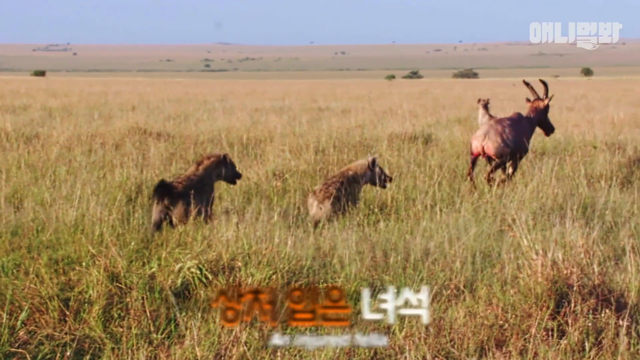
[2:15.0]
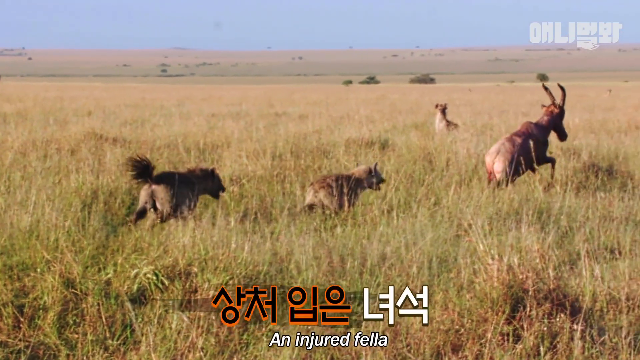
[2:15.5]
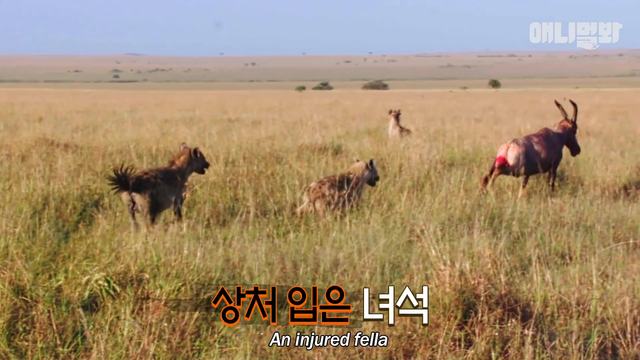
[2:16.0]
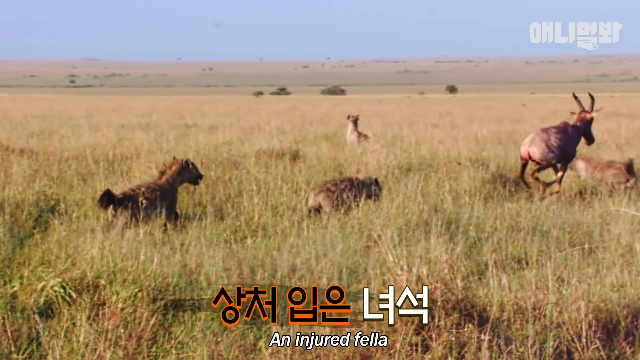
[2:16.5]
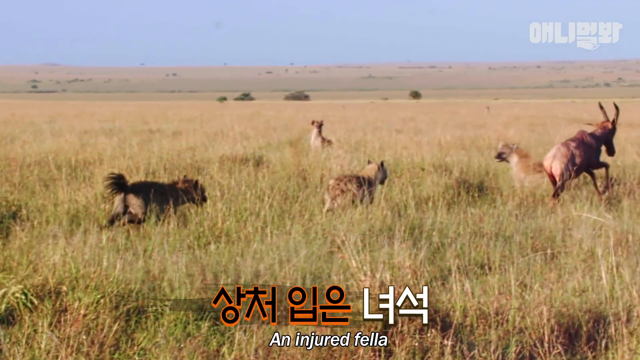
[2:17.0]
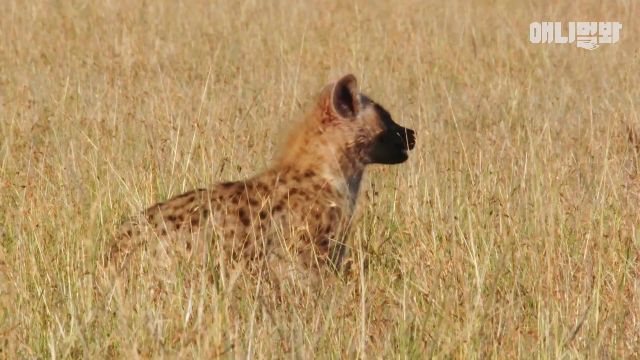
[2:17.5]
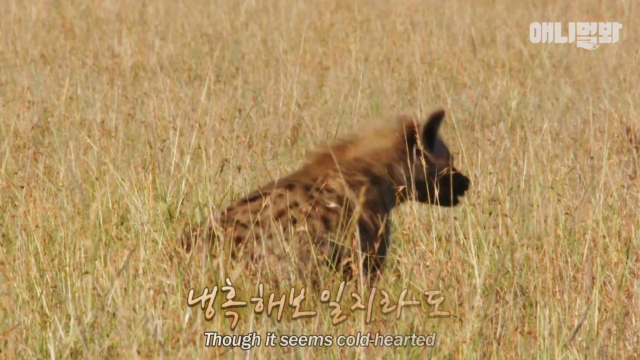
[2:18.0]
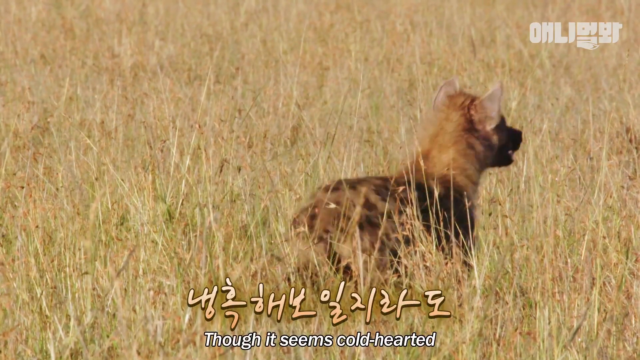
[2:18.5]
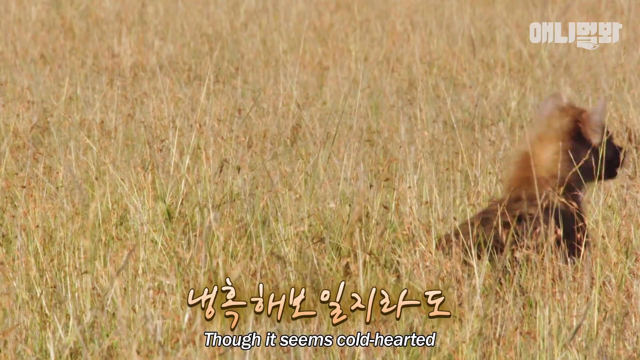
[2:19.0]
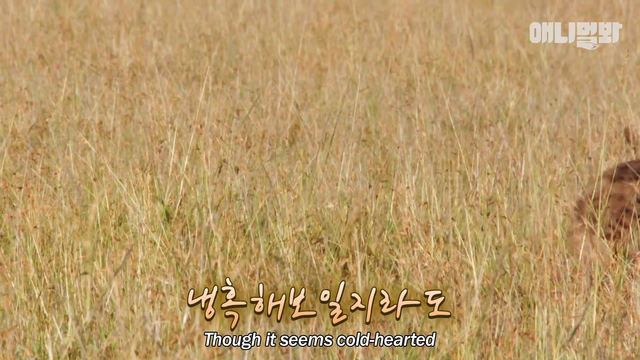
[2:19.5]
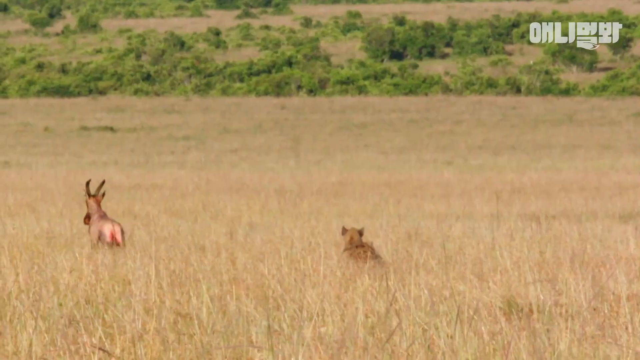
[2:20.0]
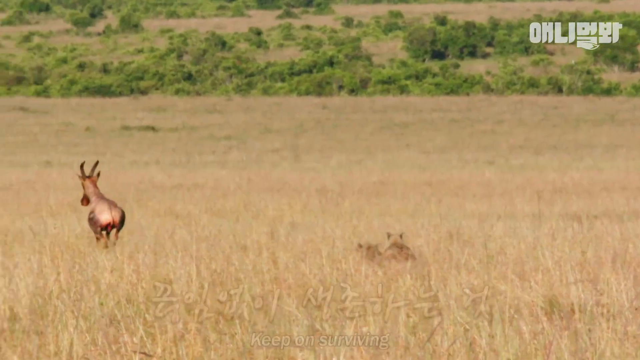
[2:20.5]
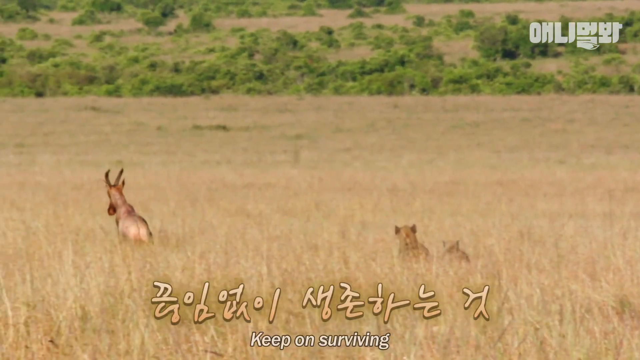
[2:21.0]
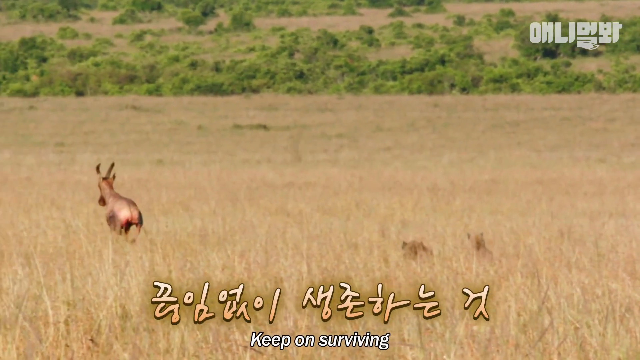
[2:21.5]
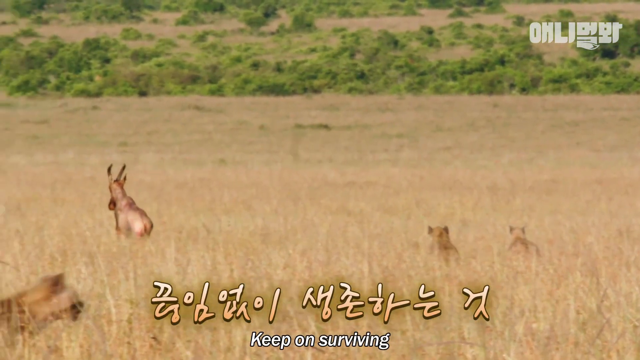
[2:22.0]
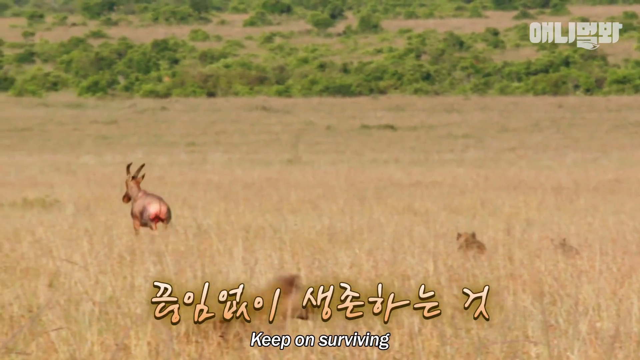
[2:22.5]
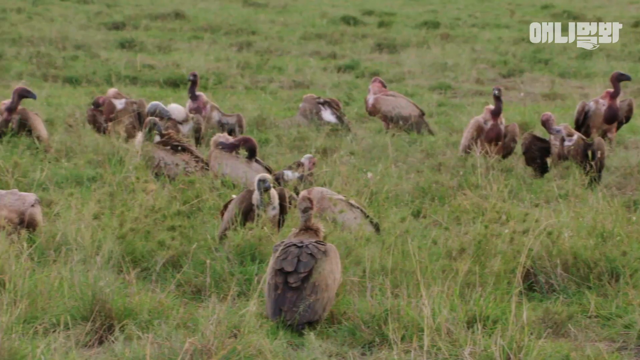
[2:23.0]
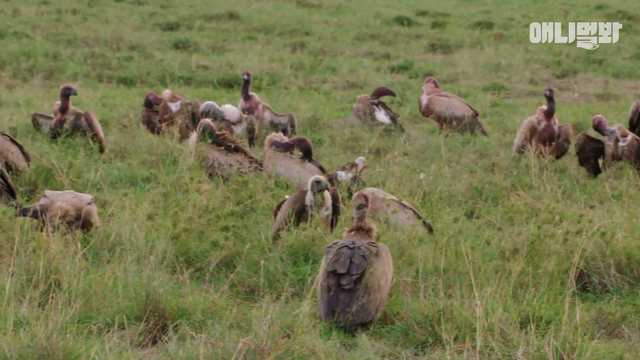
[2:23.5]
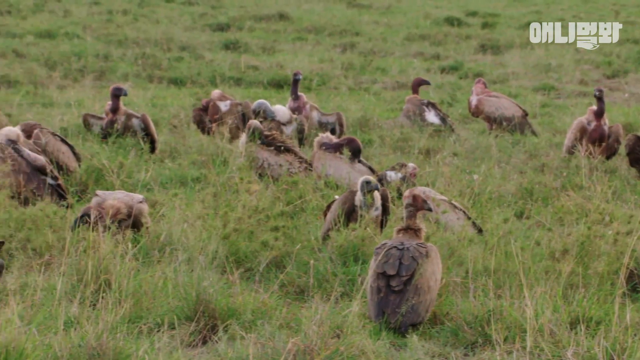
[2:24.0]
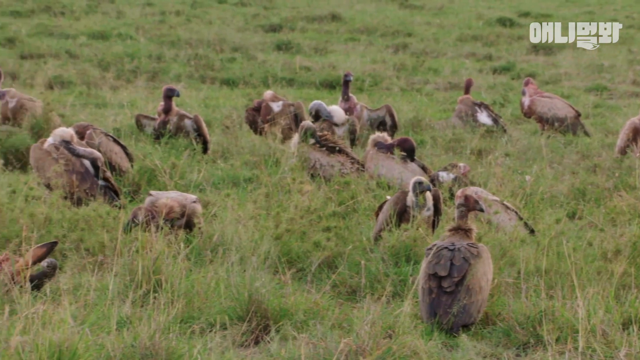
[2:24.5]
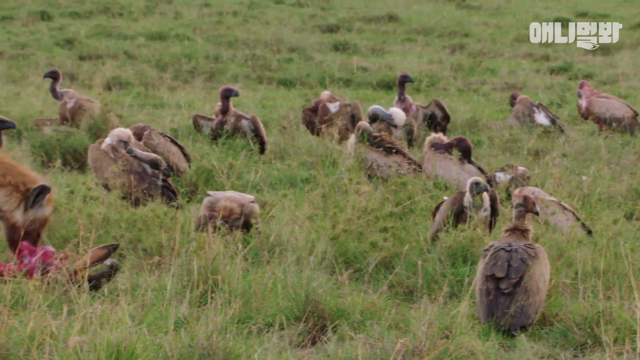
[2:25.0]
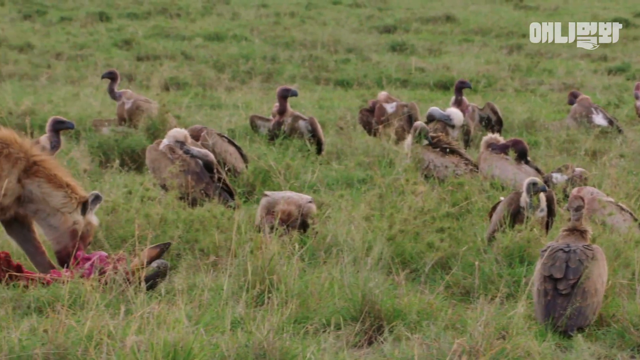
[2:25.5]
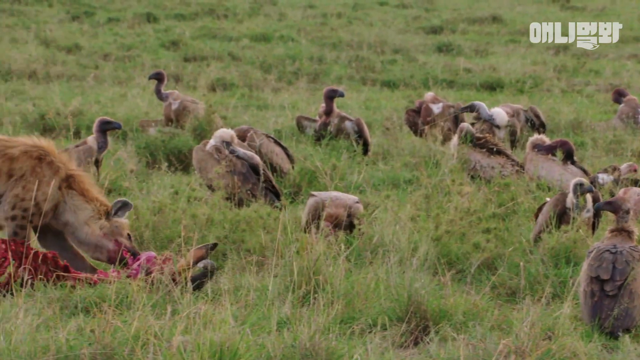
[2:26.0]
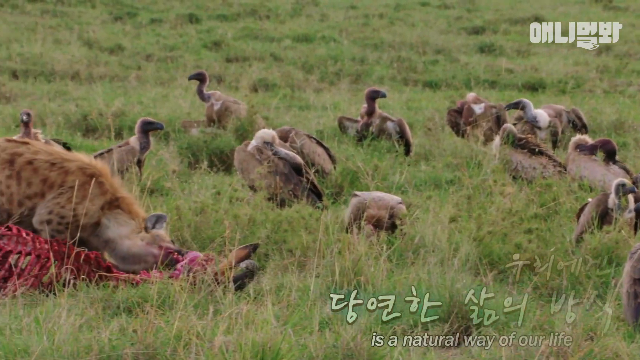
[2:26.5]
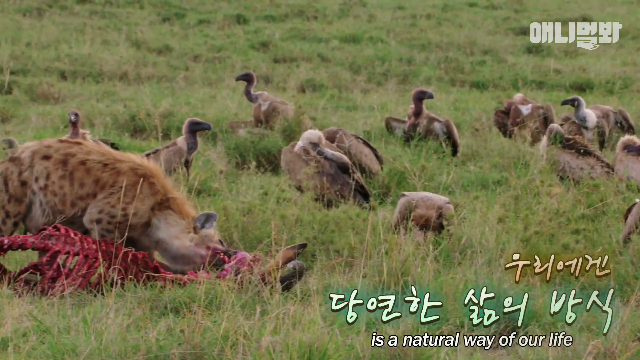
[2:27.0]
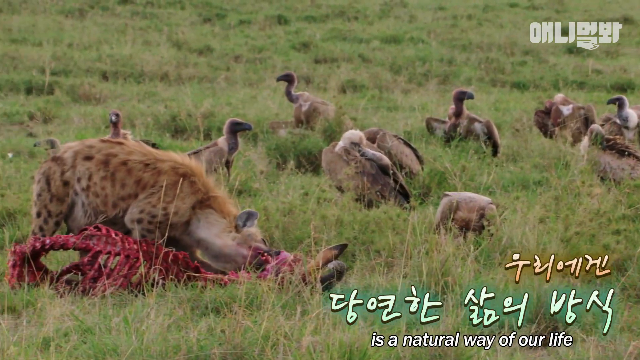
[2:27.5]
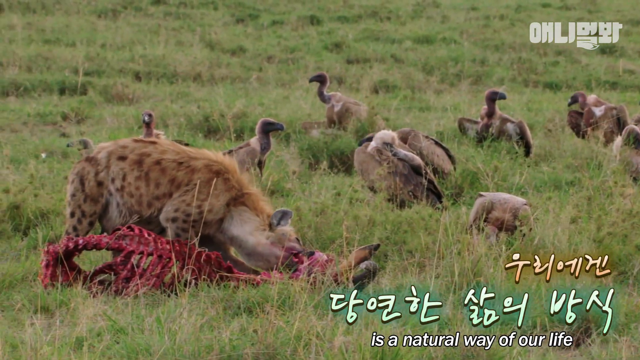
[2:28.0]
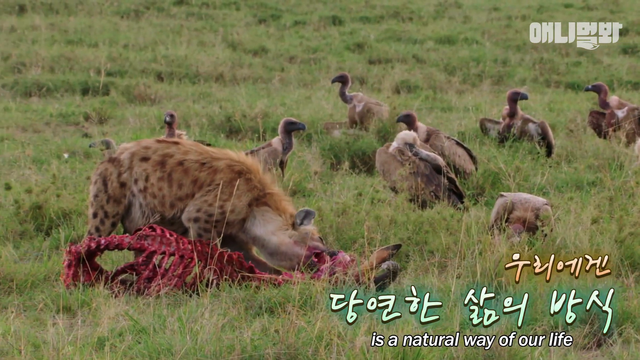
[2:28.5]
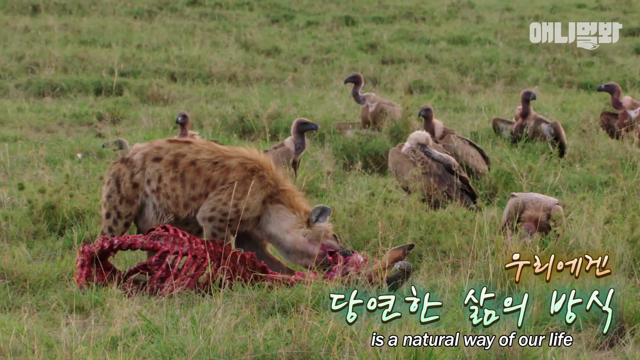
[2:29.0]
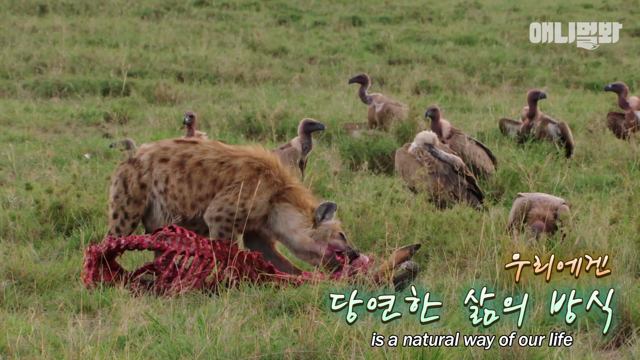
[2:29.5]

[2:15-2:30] The hyenas start chasing the antelope, and the scene quickly pans to a lioness eating the carcass of what is presumably an antelope, surrounded by a group of presumably vultures, which seem to be brown. The antelope have kind of striped black-and-white legs, a predominantly brown body and antlers. The captions seem to indicate that the hyenas are doing a bad thing but need to do it to survive.